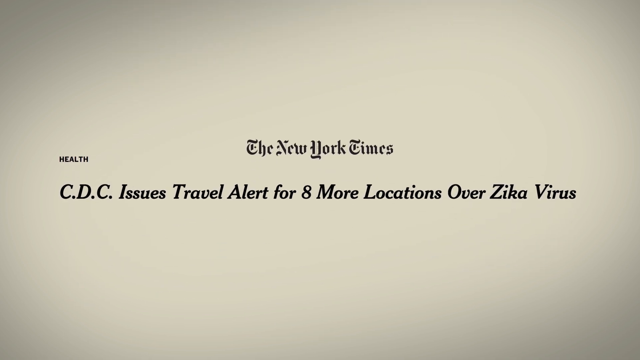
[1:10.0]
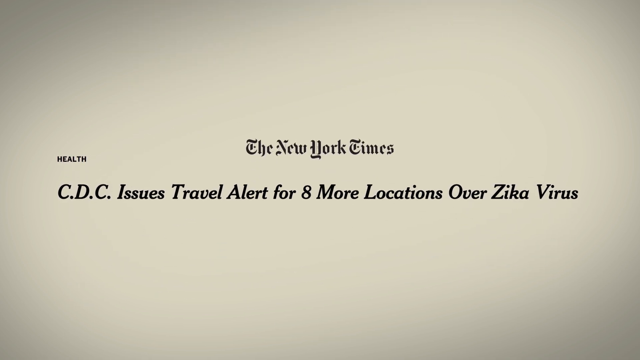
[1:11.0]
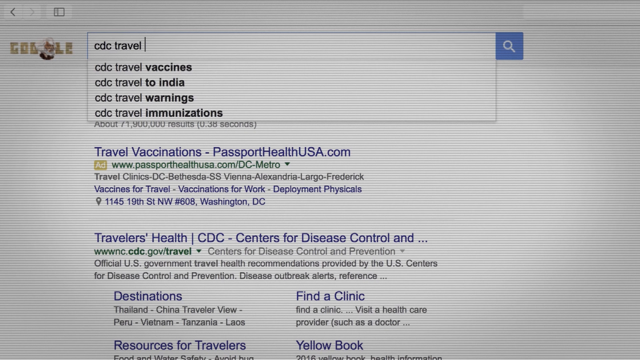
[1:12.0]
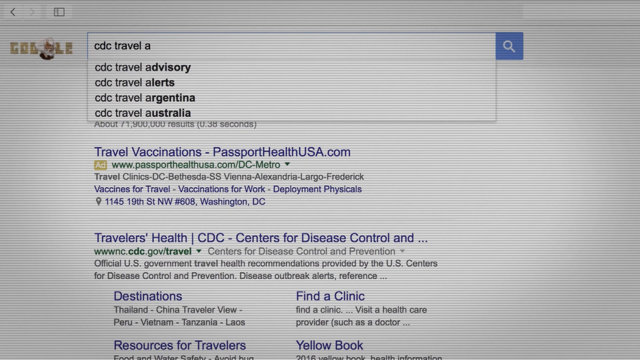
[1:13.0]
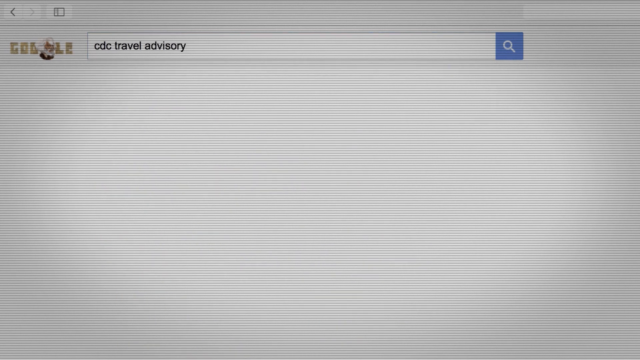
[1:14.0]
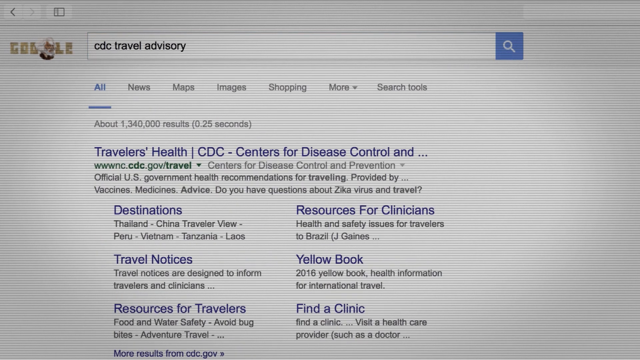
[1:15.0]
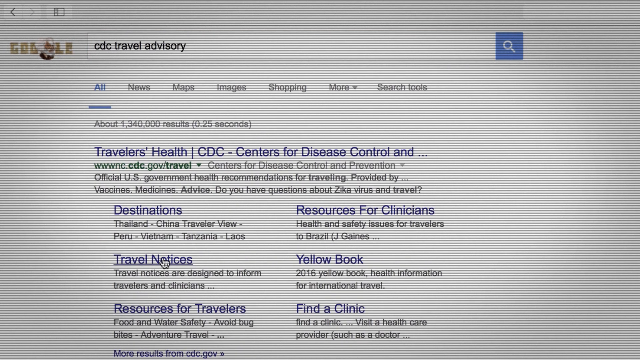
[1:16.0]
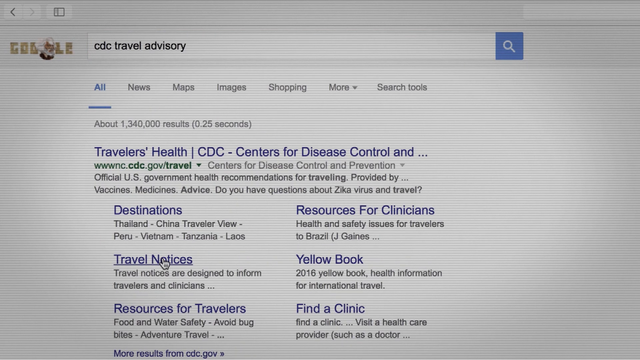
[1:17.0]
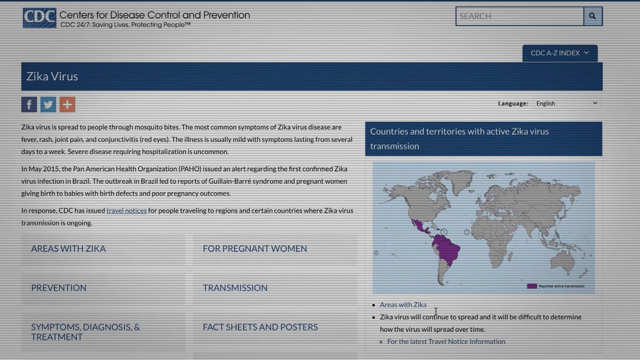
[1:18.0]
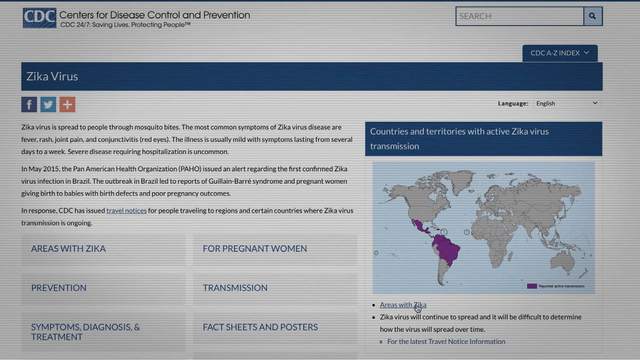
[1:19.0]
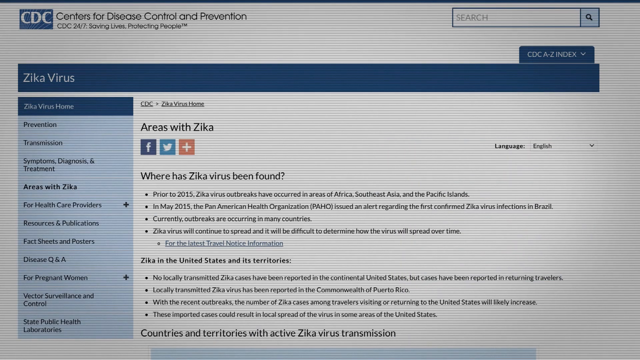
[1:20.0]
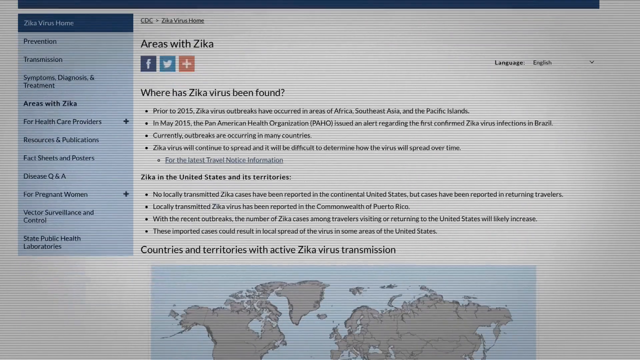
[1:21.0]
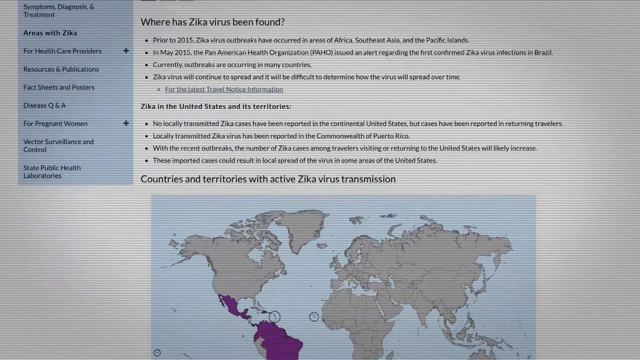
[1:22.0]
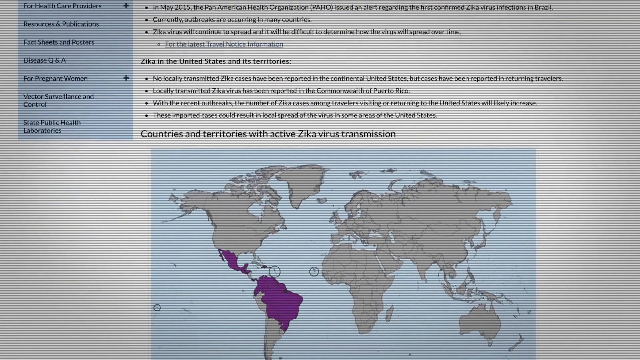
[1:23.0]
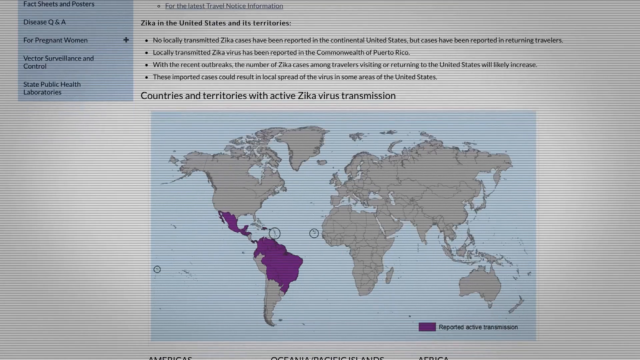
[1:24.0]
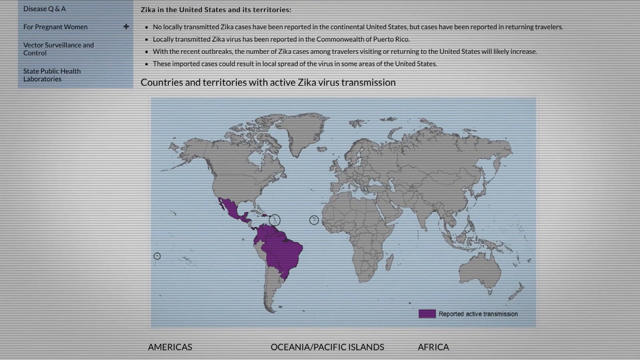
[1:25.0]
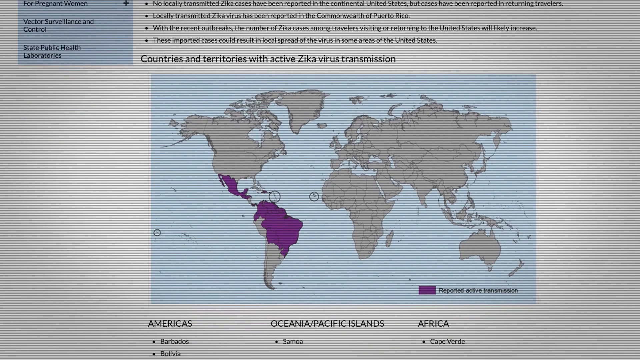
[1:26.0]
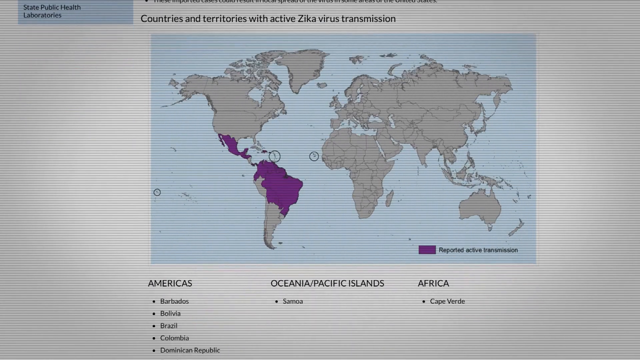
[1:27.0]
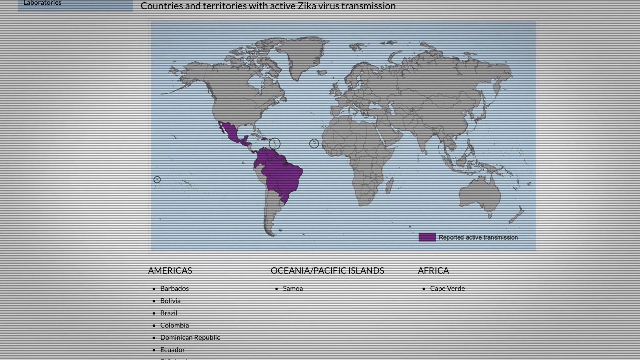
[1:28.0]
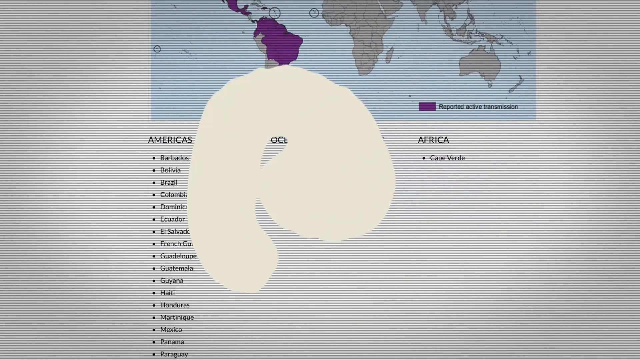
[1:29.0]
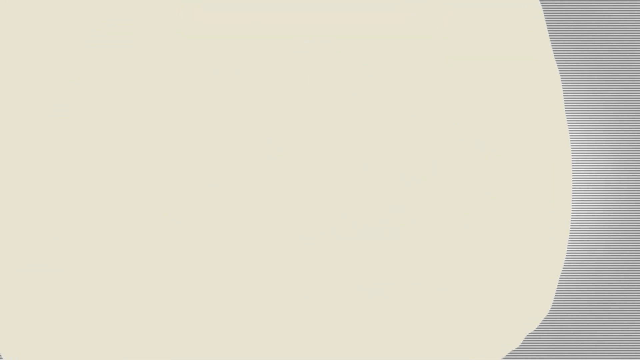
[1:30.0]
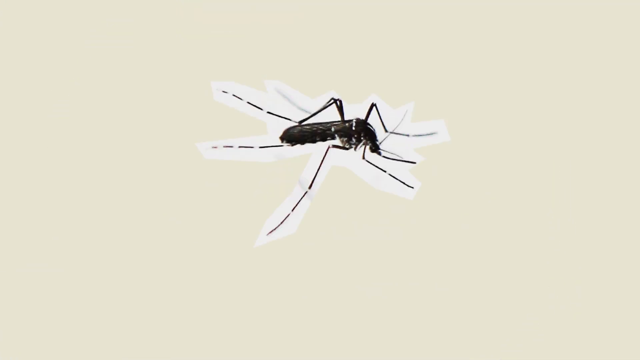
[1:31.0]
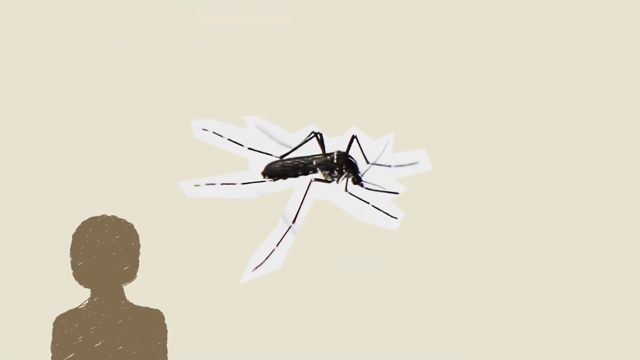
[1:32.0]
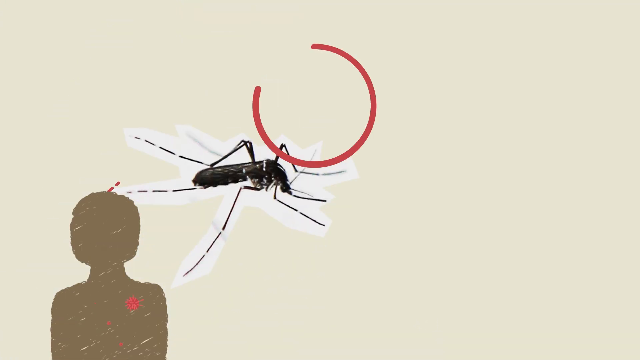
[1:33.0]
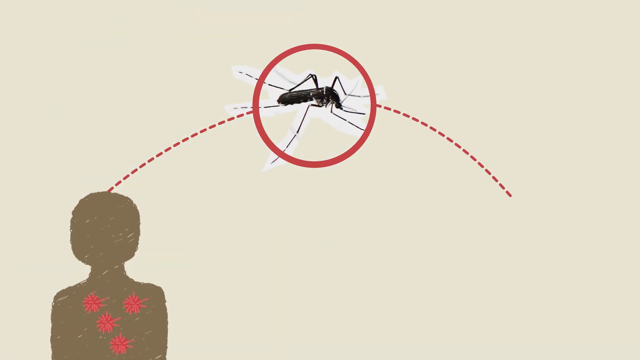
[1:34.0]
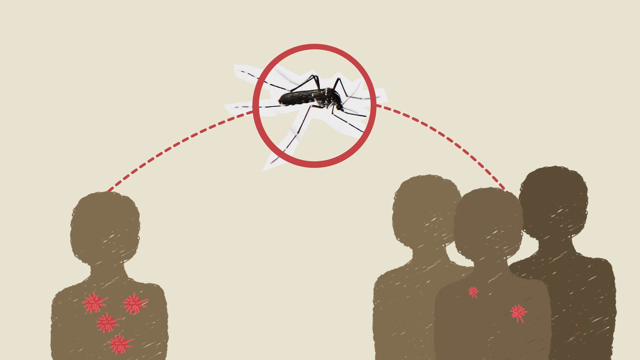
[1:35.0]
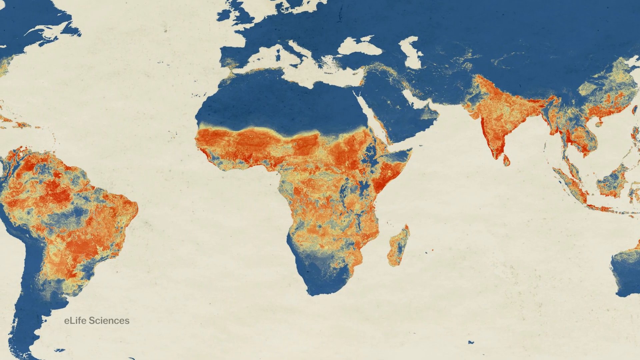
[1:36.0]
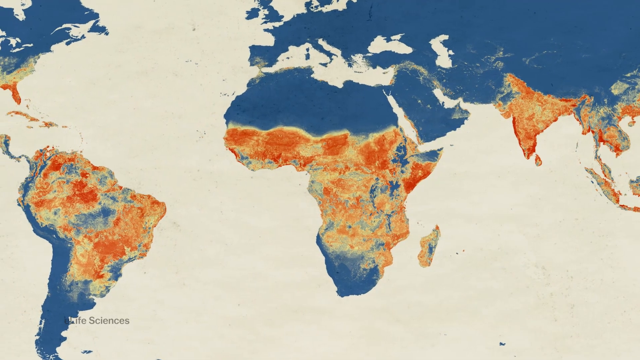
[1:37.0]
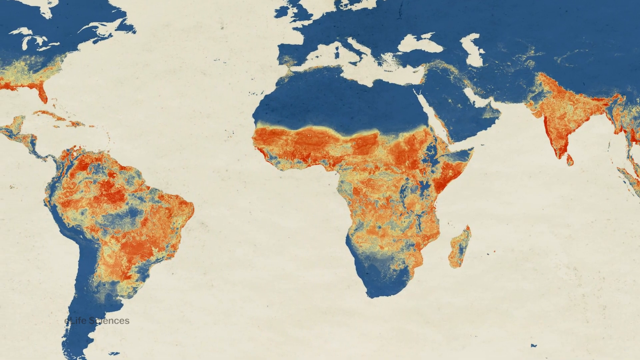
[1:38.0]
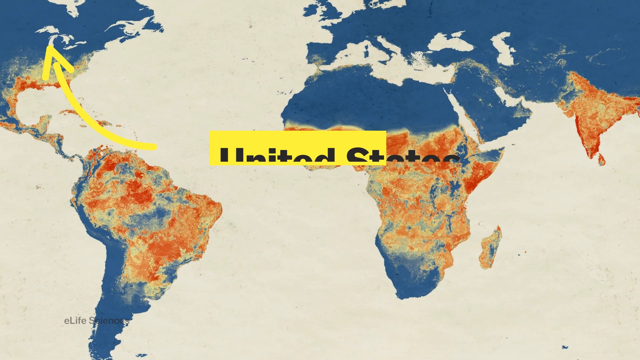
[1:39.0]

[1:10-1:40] A computer screen shows CDC travel advisory alerts, with travel entries such as Argentina and Australia. A map is on the right with a color-coded legend, and items such as Zika, pregnant women, prevention, transmission and areas of Zika. The map shows the Americas, Barbados, Brazil, Samoa, and Cap Verde in Africa, among other places. An insect is shown, possibly a mosquito. A map then moves over the earth toward the United States.